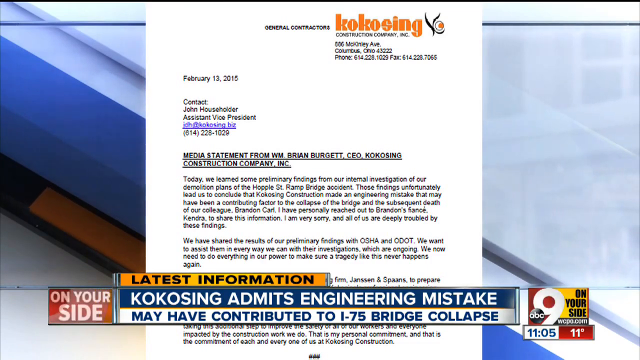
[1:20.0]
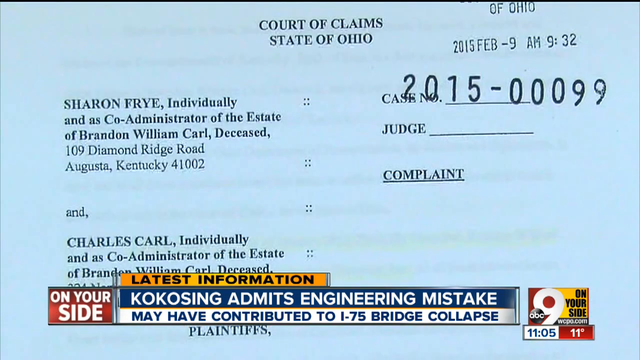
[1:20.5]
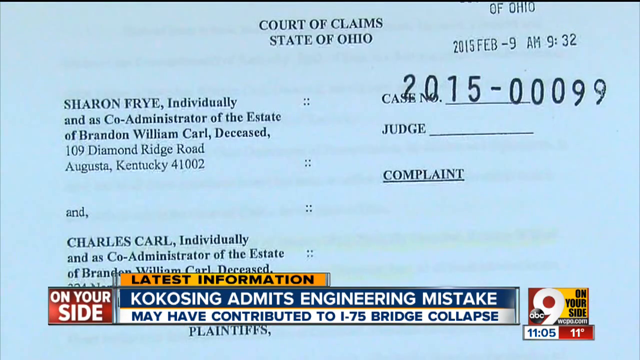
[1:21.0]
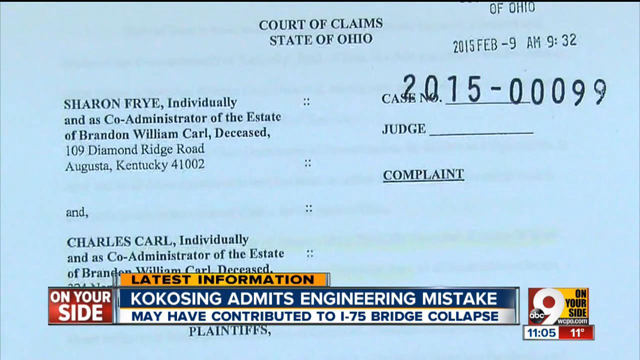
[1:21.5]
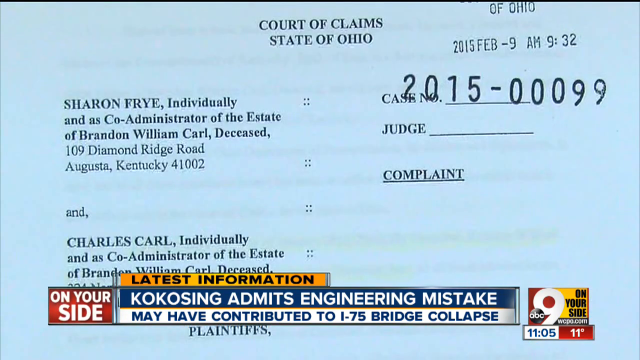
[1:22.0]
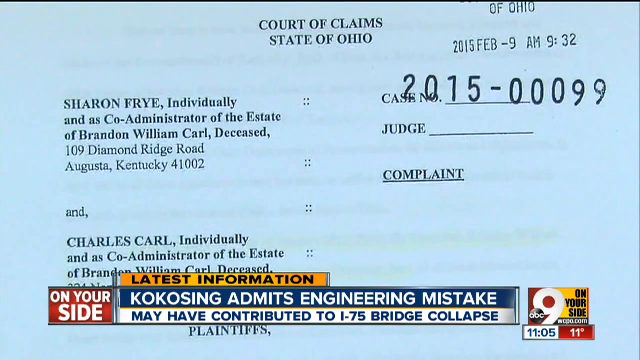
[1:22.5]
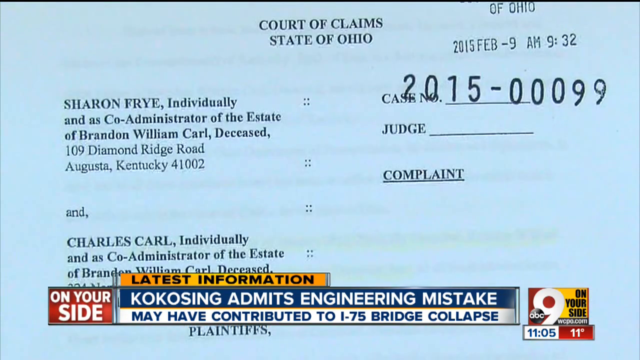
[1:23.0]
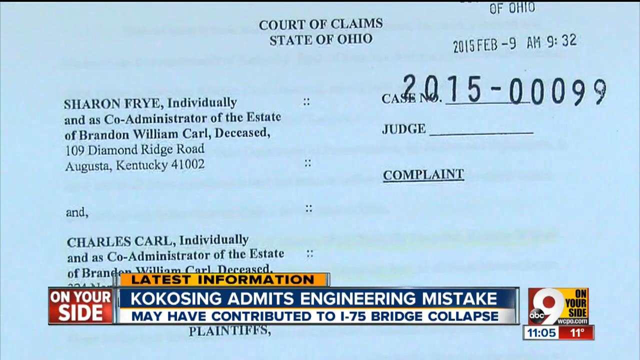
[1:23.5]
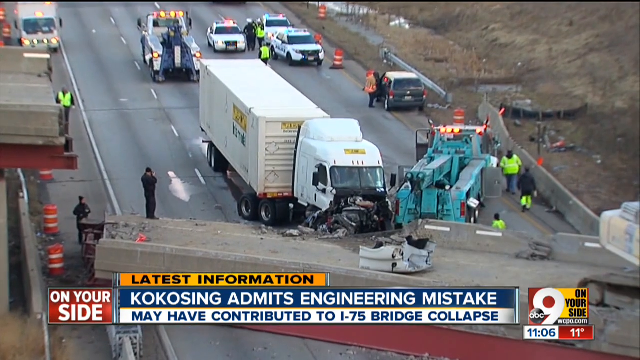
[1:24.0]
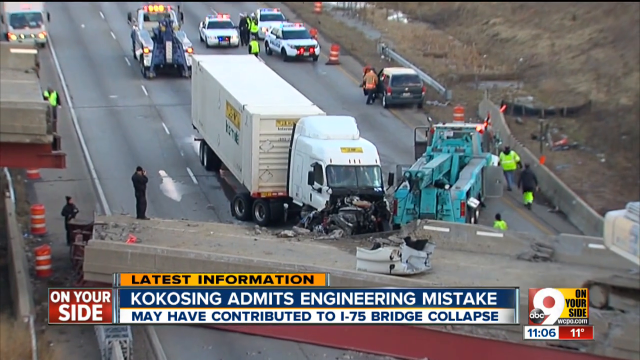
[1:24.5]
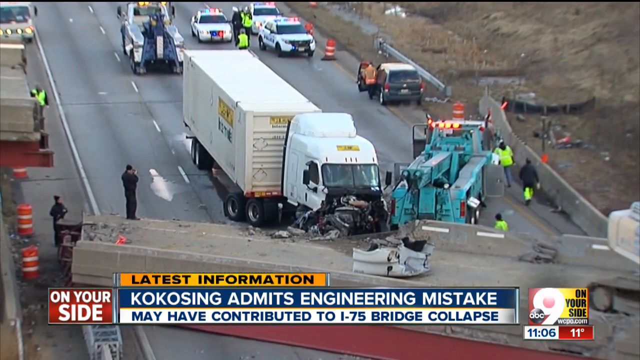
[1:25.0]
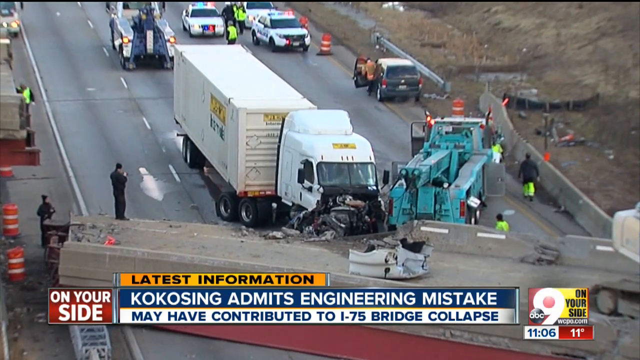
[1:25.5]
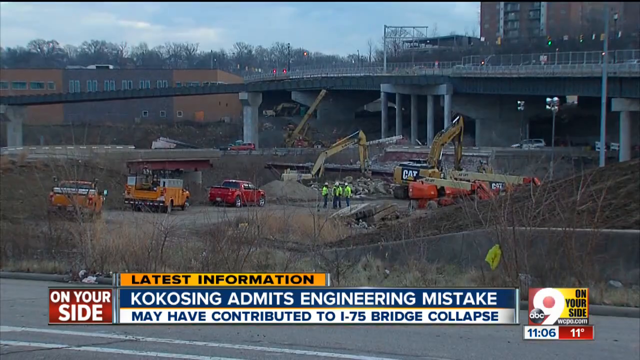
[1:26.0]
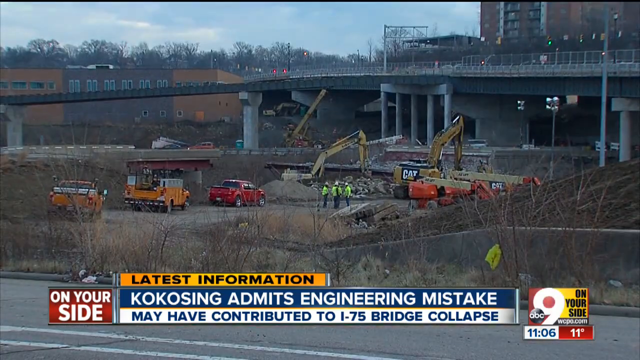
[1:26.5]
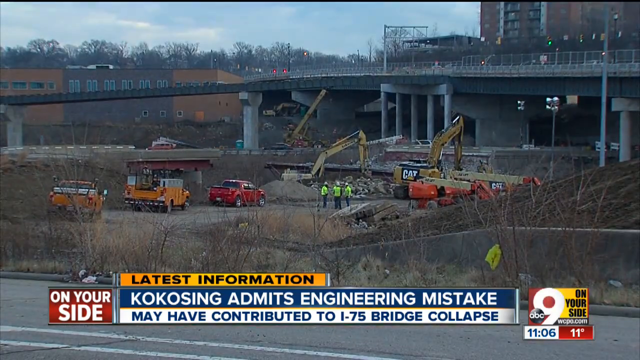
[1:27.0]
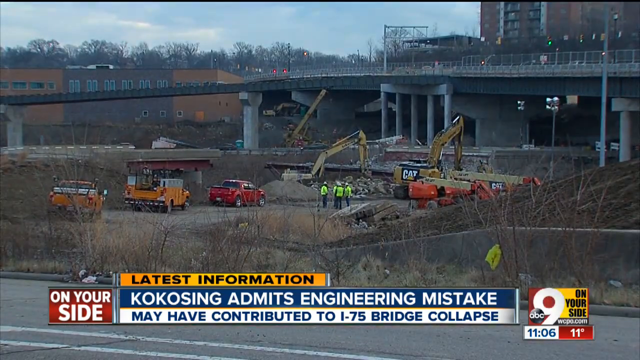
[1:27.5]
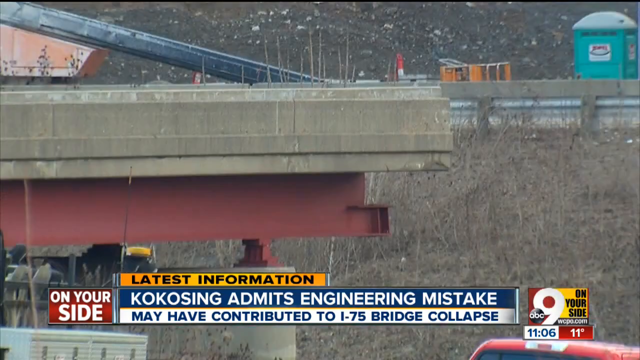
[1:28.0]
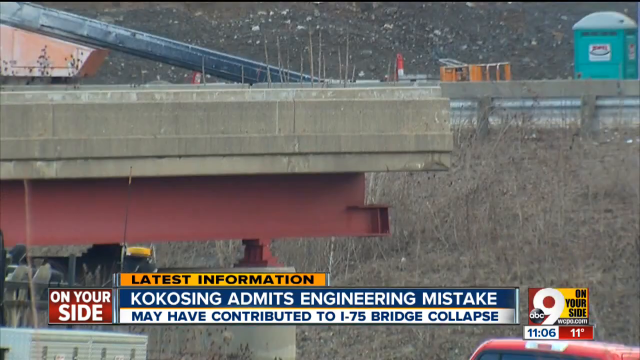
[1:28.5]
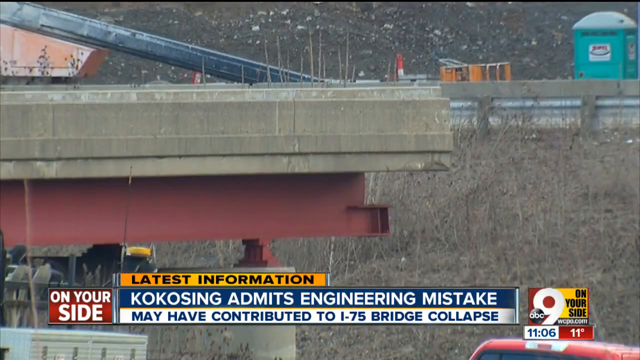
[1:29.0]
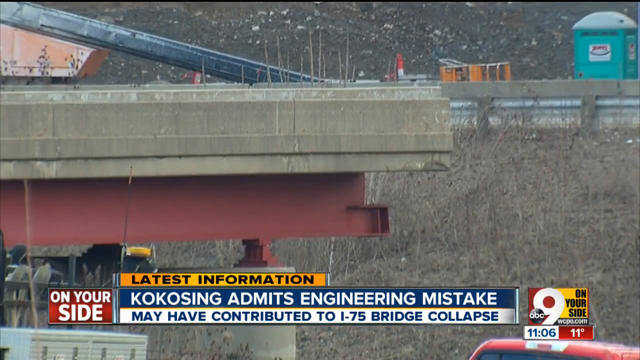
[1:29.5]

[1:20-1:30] The Coco Singh statement to the media is shown, followed by a legal document that apparently indicates the company is being sued. It reads case number 2015, a complaint, and names Sharon Frye, individually and as co-administrator of the estate of William Carl, deceased, at 109 Diamond Ridge Road. Scenes then show the crushed truck beneath the collapsed bridge.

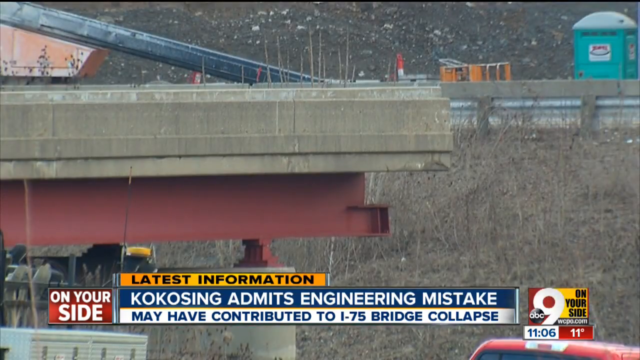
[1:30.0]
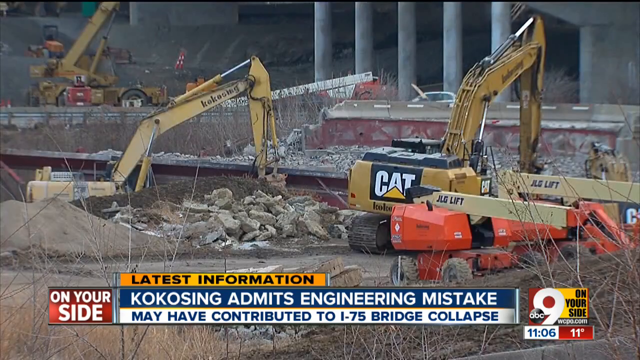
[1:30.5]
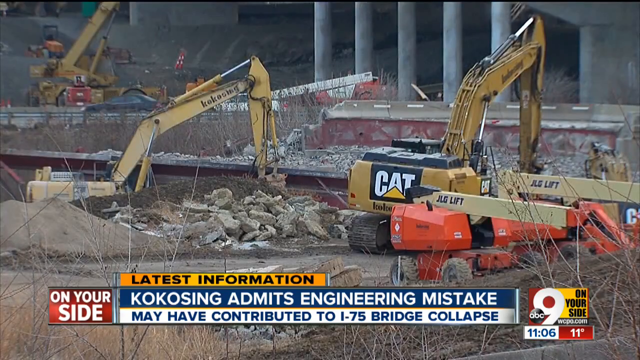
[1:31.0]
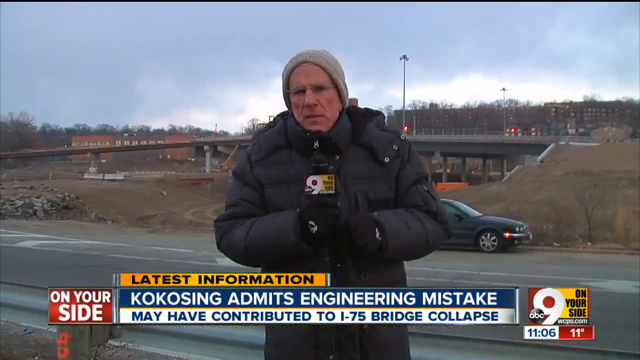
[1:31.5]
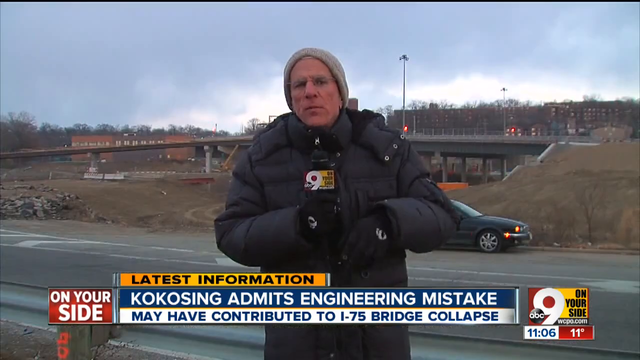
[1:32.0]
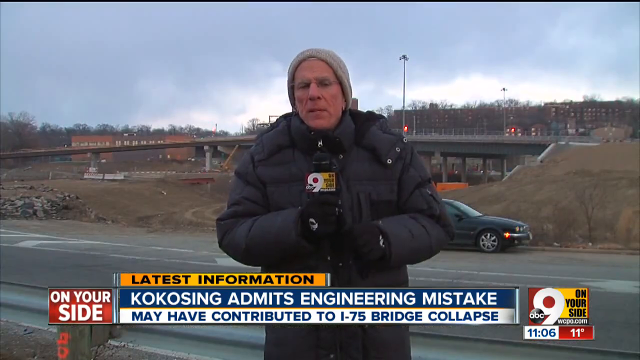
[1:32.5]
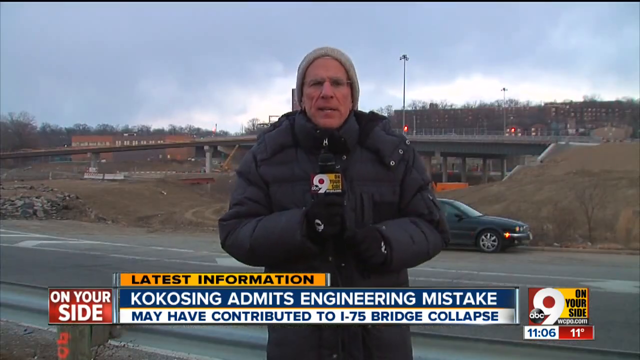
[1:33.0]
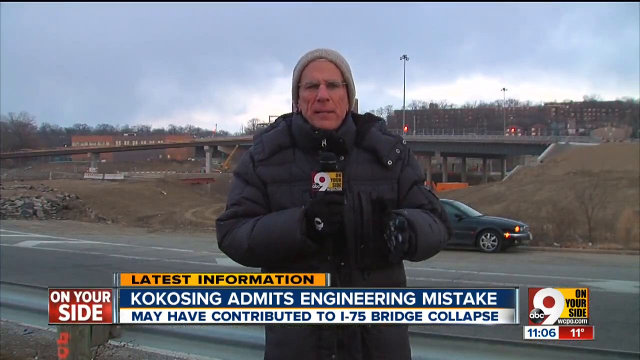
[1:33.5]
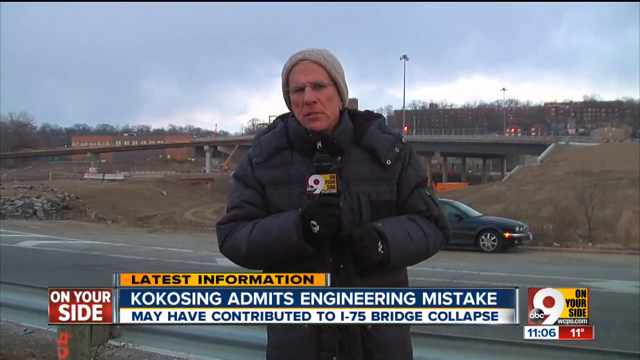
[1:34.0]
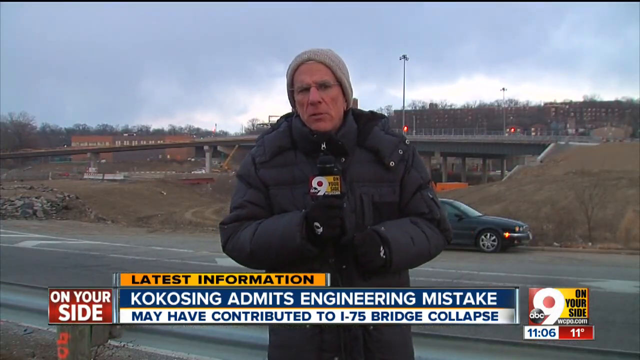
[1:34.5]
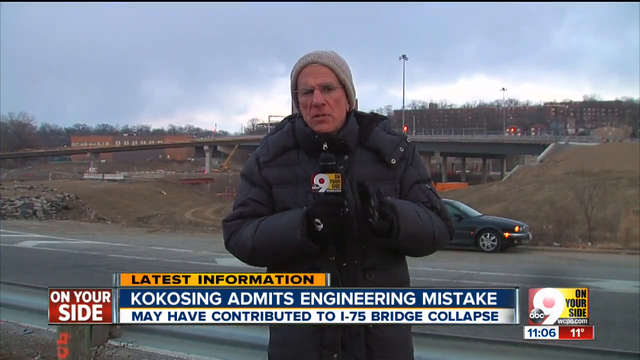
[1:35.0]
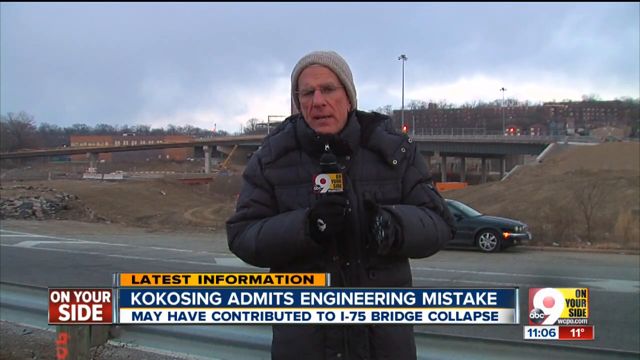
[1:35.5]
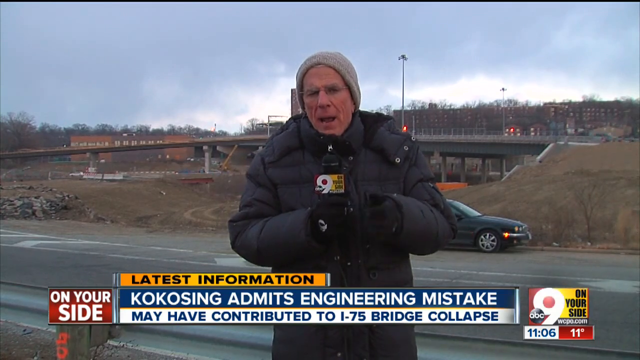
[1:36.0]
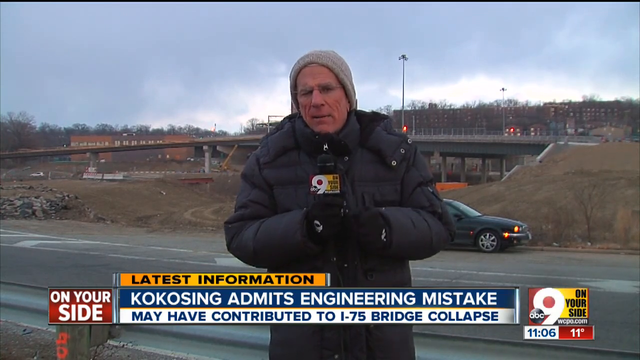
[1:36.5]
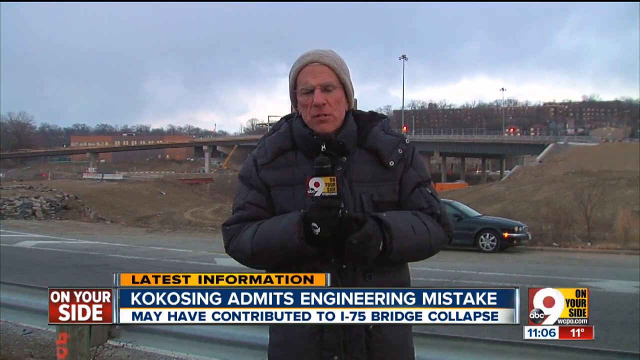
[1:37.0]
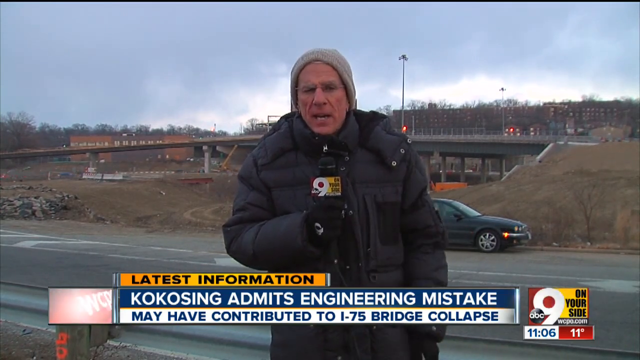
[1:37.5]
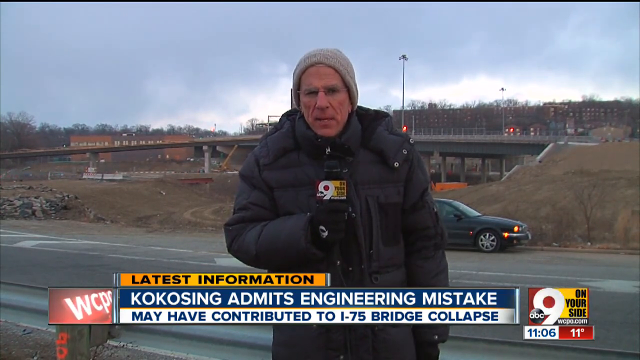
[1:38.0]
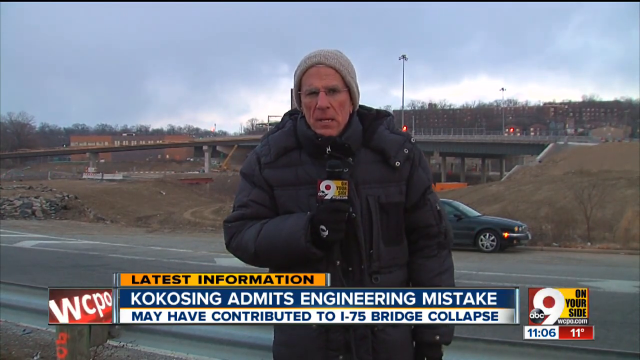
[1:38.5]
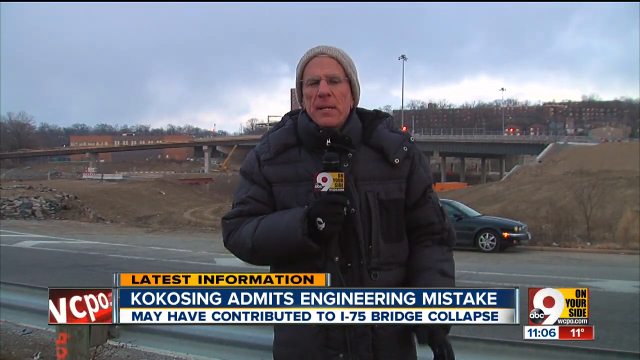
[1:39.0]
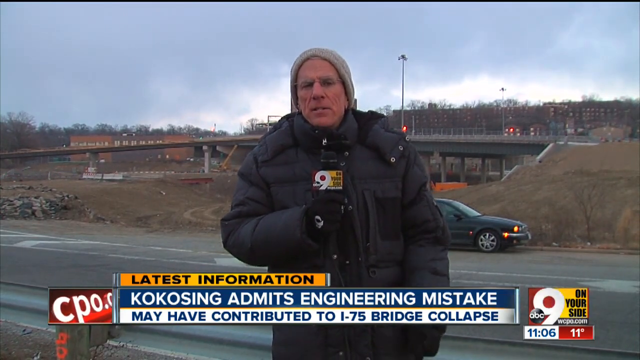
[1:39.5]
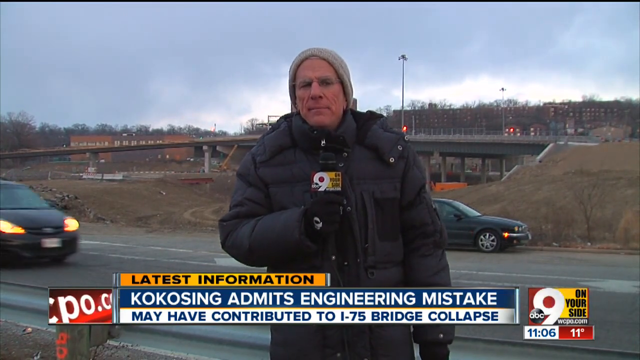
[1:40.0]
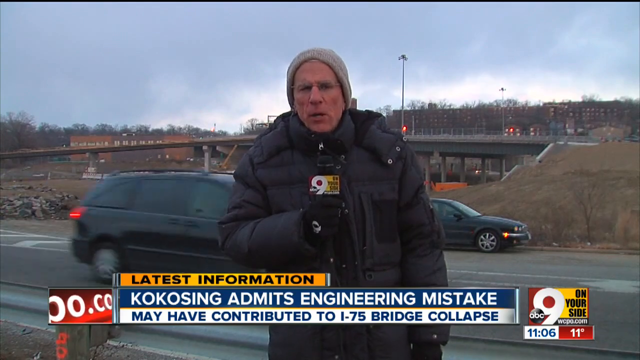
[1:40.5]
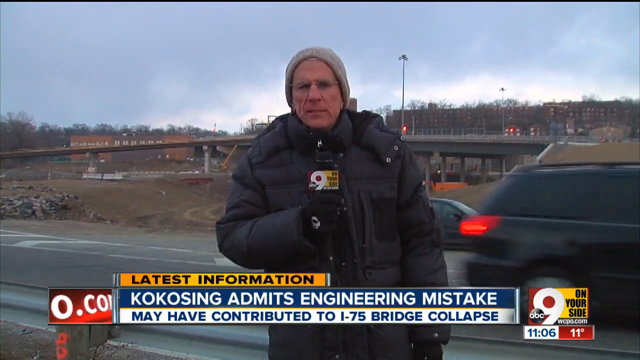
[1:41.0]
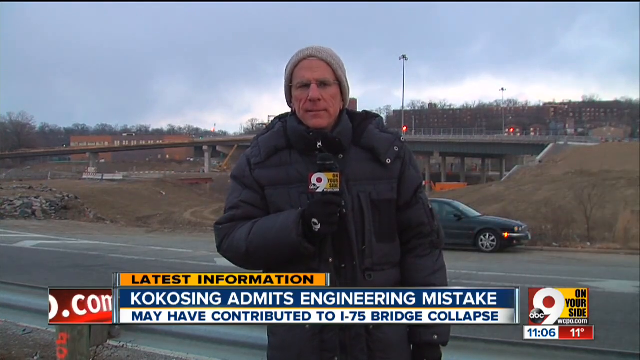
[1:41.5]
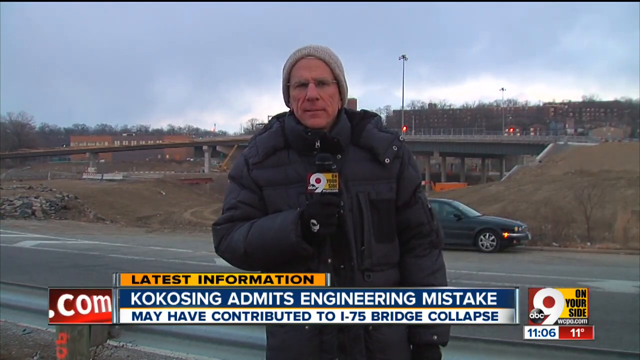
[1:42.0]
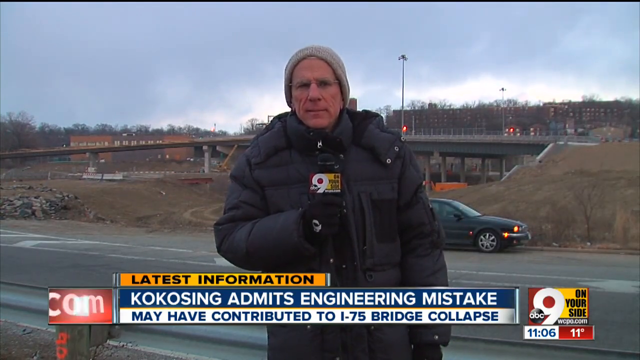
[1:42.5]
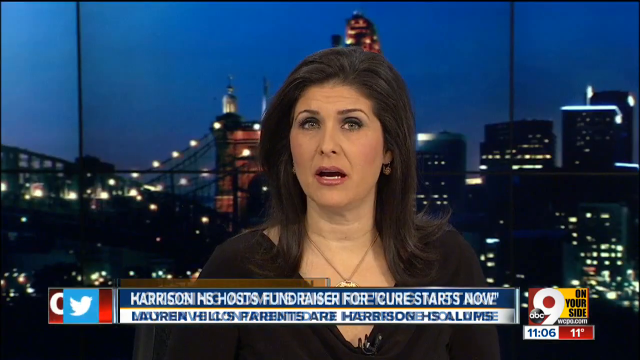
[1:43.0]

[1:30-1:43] On Channel 9 News in Ohio, various cranes and bulldozers remove the debris and rubble under which a man was crushed to death in his 18-wheeler as he passed beneath the overpass.